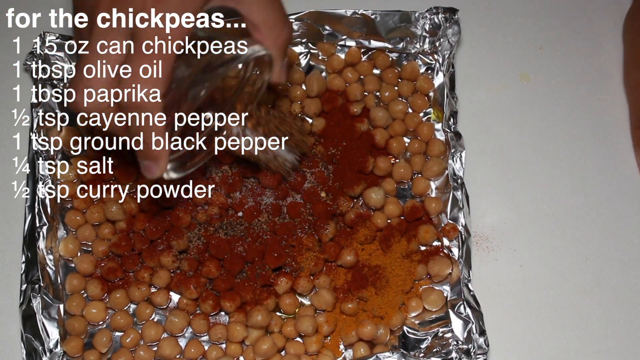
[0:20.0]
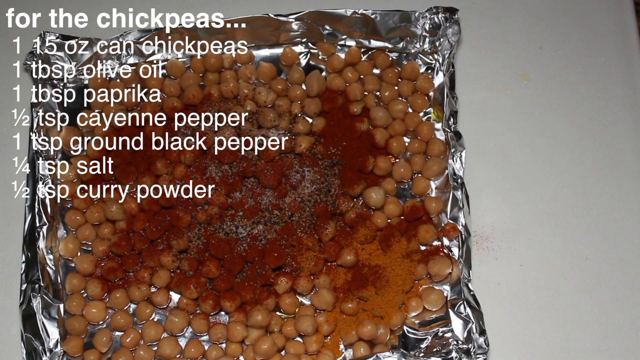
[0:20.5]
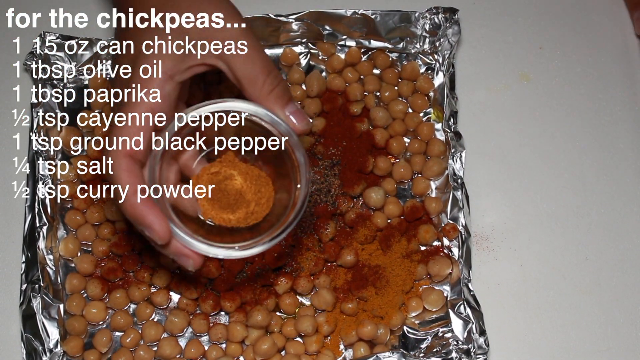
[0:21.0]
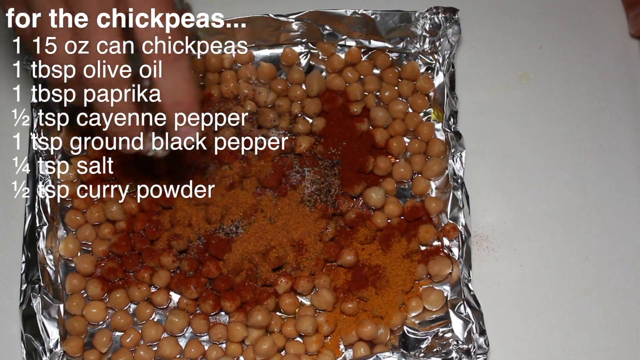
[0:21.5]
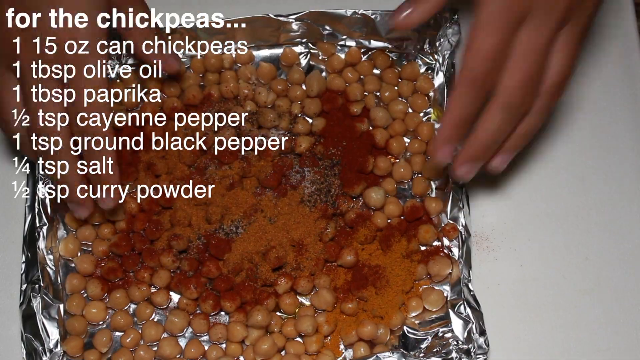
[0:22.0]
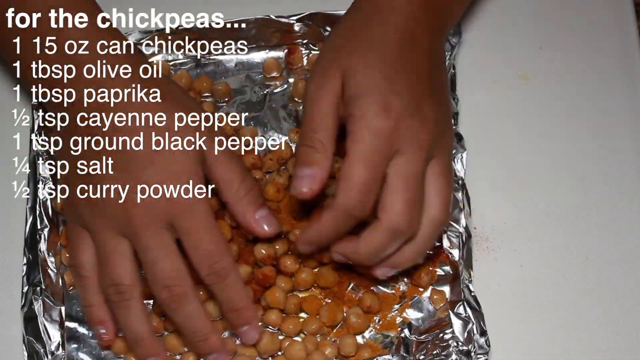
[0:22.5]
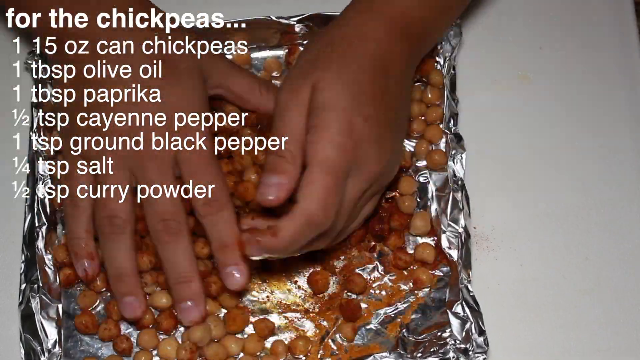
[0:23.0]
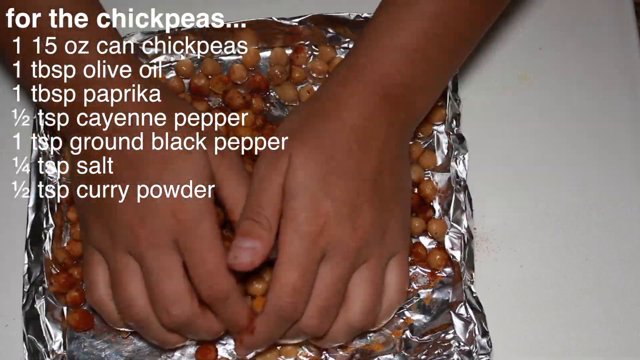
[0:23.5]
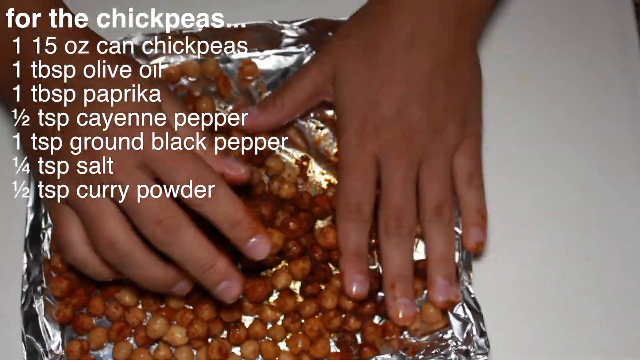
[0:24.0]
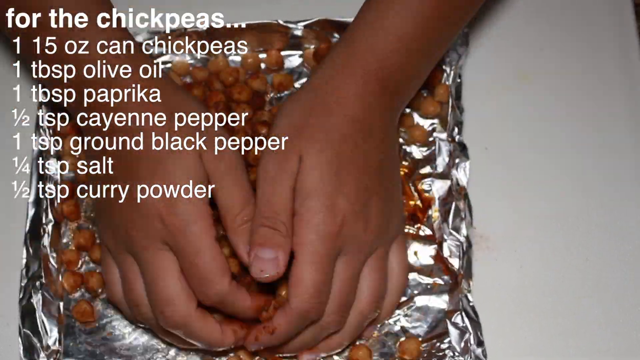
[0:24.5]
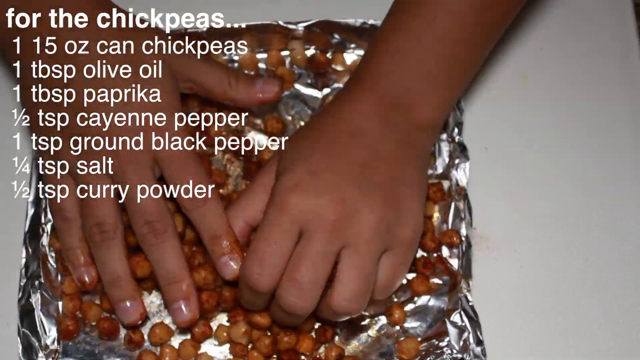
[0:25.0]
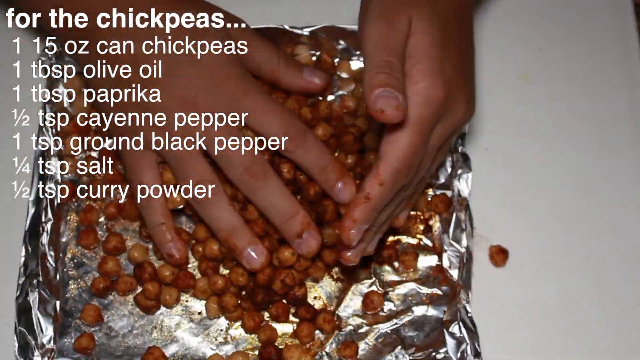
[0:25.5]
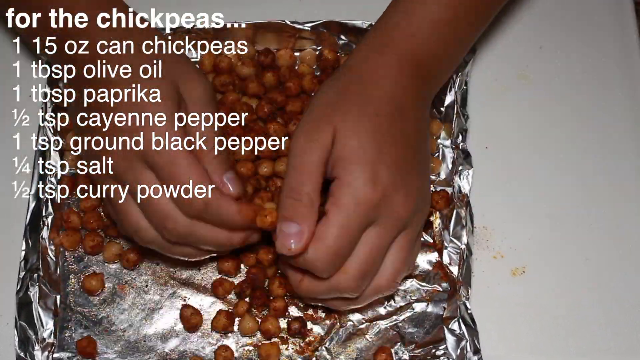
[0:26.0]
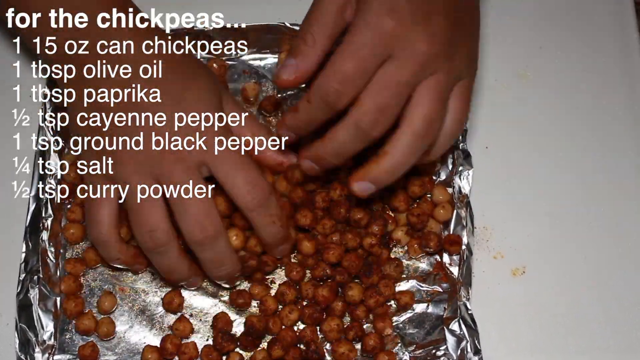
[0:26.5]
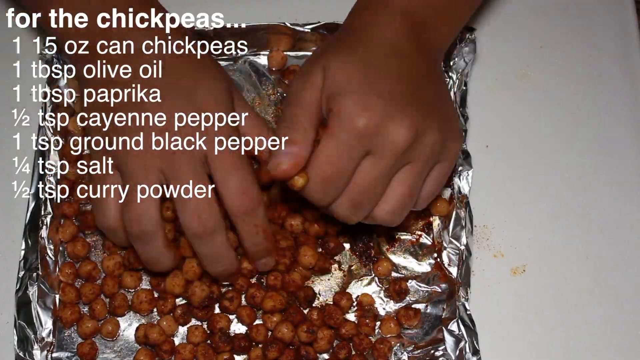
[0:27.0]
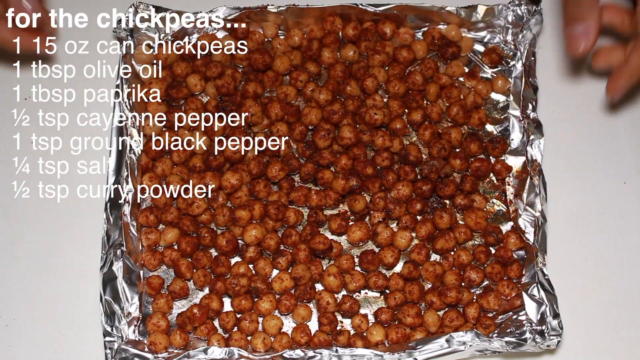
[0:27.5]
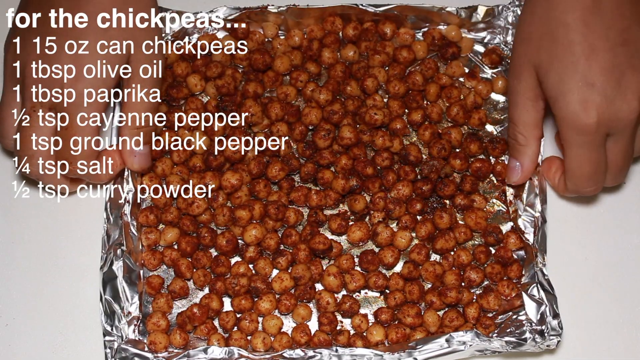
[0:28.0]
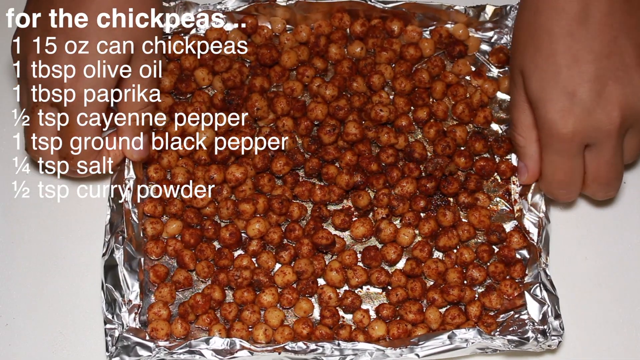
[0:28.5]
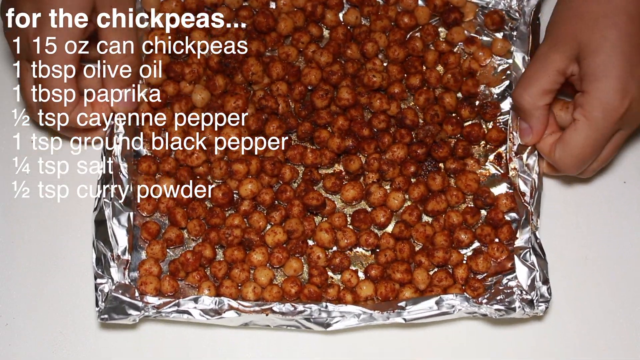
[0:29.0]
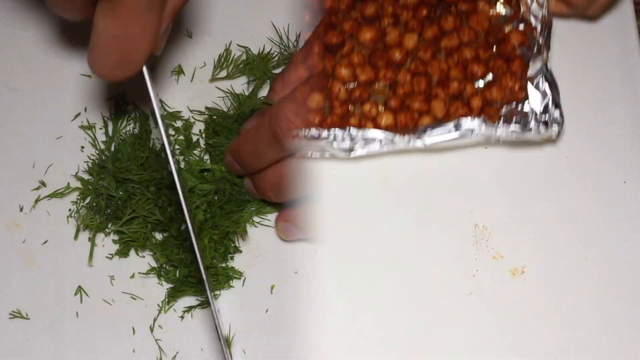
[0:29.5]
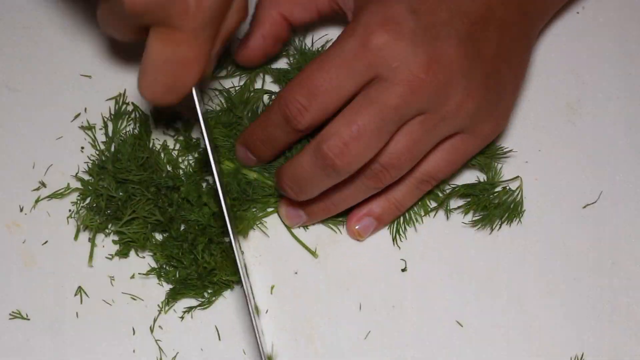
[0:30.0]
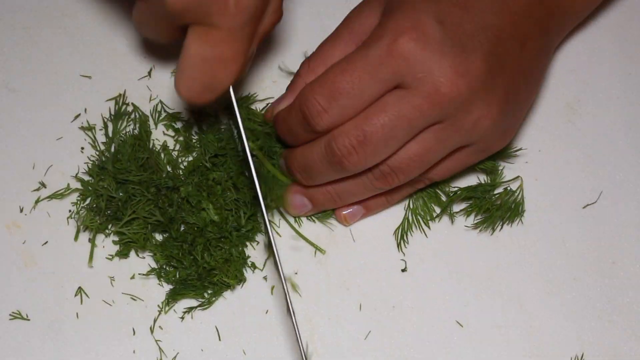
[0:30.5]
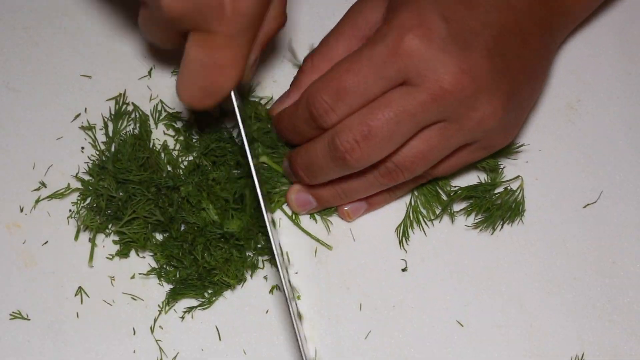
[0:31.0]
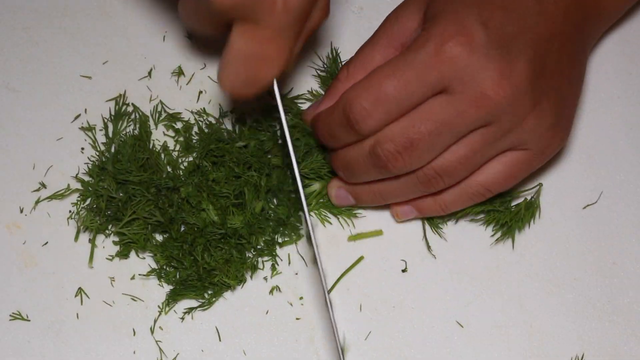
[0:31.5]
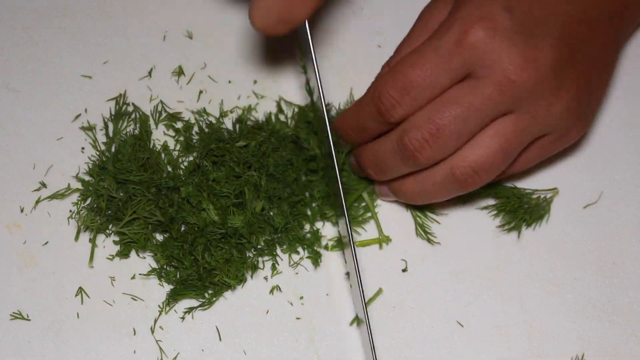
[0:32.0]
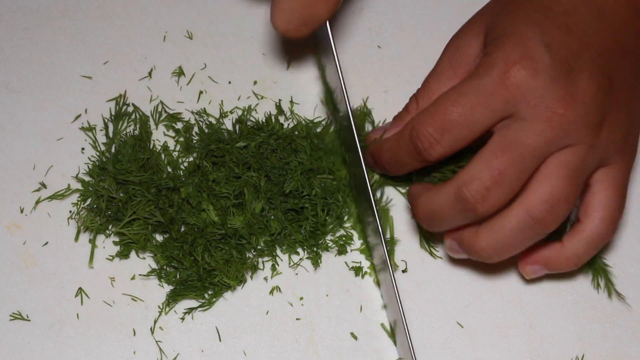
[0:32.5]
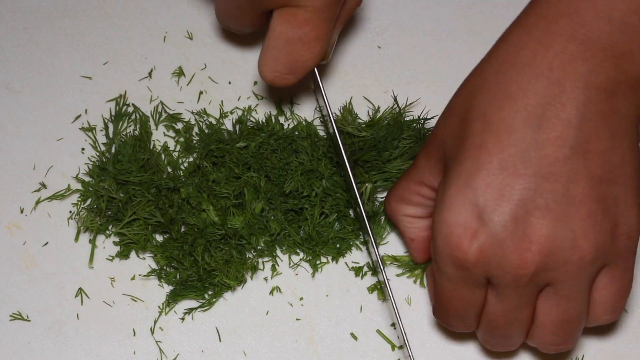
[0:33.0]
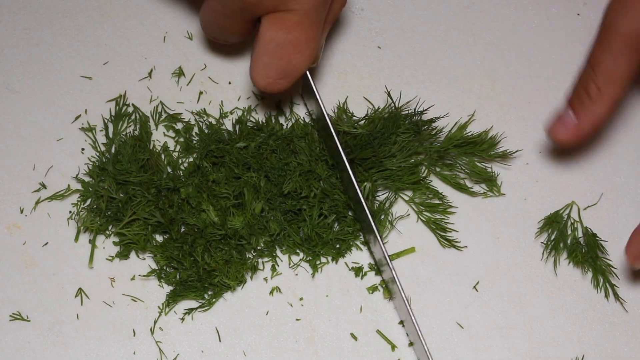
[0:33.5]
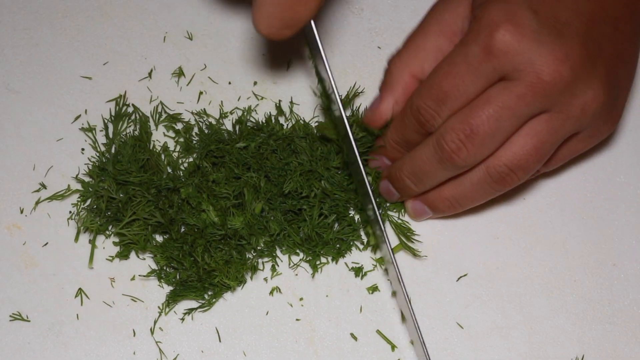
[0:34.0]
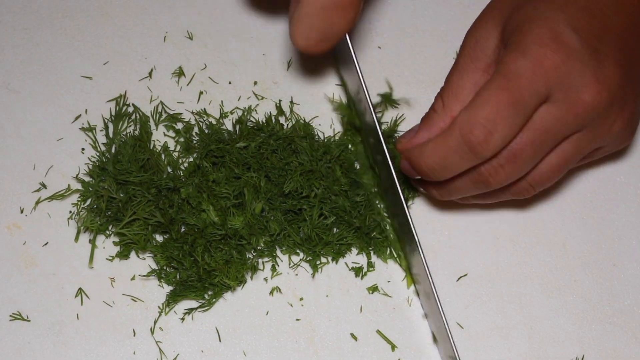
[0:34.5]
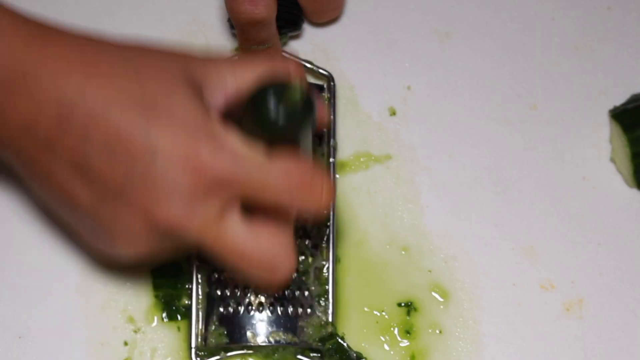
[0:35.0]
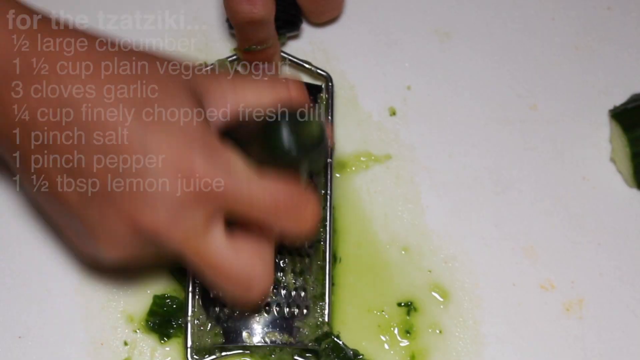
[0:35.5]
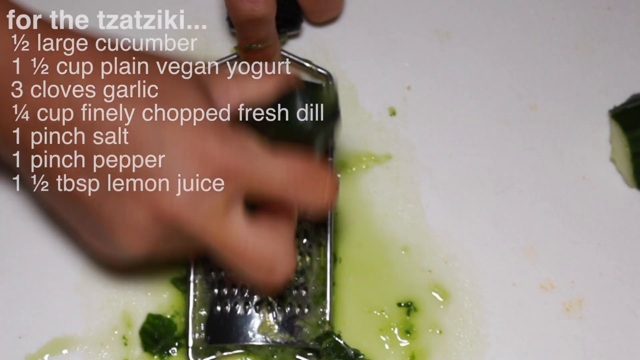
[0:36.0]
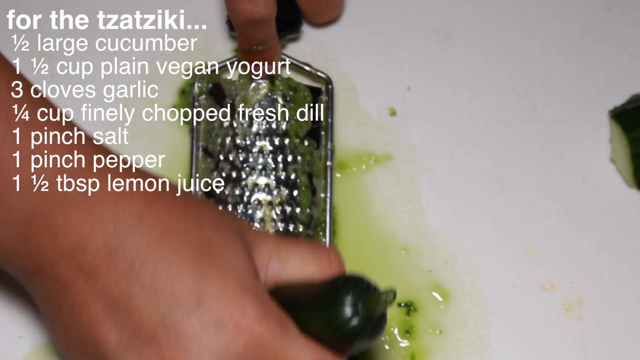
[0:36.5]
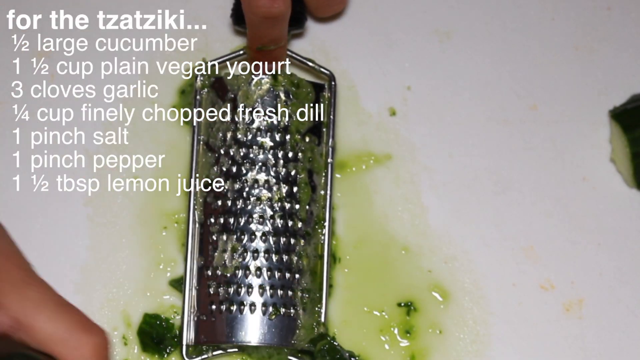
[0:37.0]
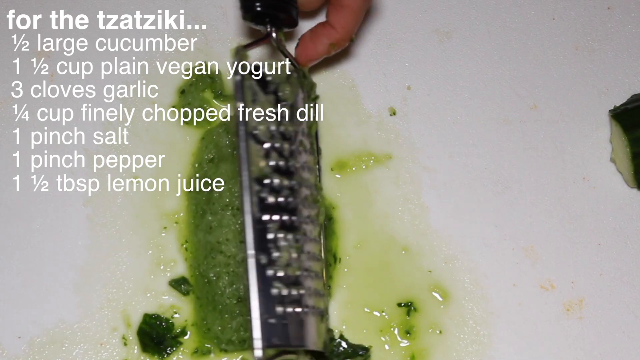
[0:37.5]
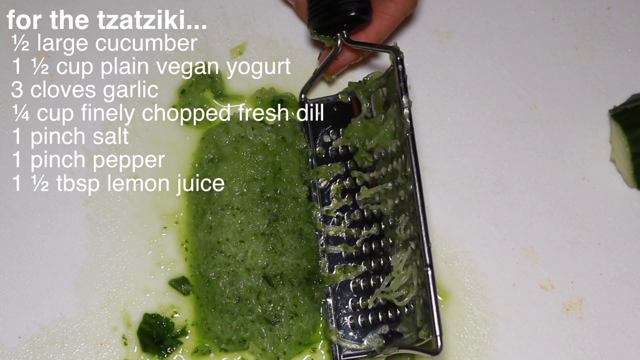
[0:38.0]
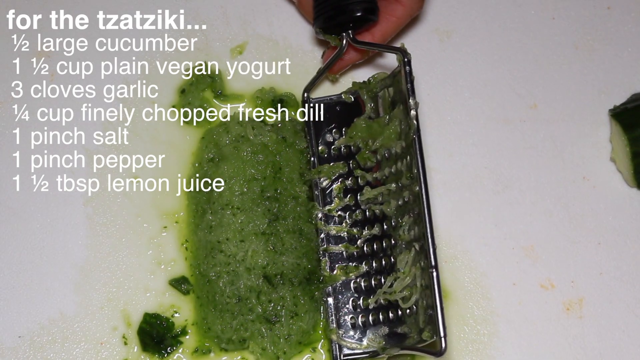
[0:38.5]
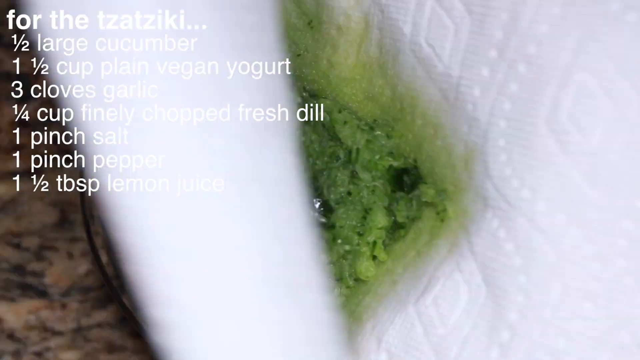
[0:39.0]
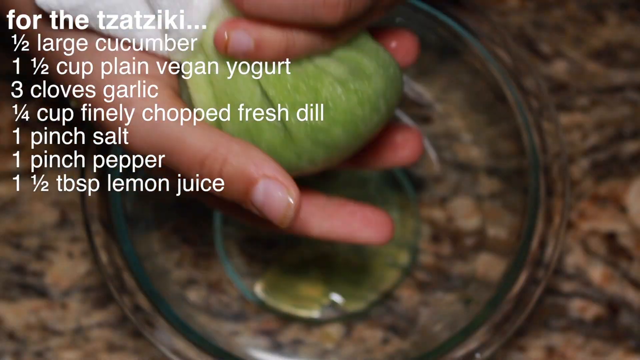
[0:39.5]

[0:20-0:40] The cook, who has listed her ingredients for a chickpea recipe, pats the chickpeas dry between two white paper rolls. Once they are dried, she places the chickpeas flat on silver foil. To them she adds a tablespoon of olive oil, a tablespoon of paprika, half a tablespoon of cayenne pepper, a teaspoon of ground black pepper, a quarter teaspoon of salt and half a tablespoon of curry powder. She sprinkles all the ingredients and rubs them through the chickpeas with both hands so they are evenly coated, then lays the chickpeas flat on the foil. The angle changes to an aerial view, showing her hands using a silver knife to finely chop fresh dill. She then grates fresh cucumber with a silver grater.